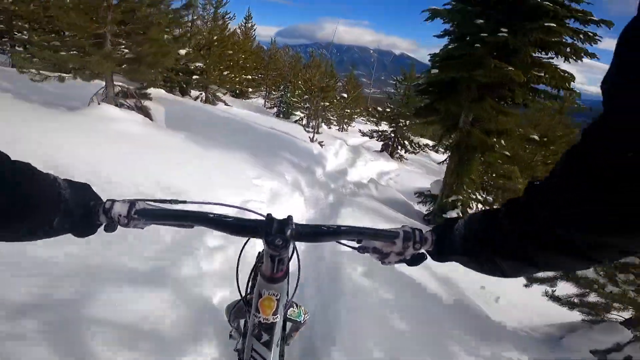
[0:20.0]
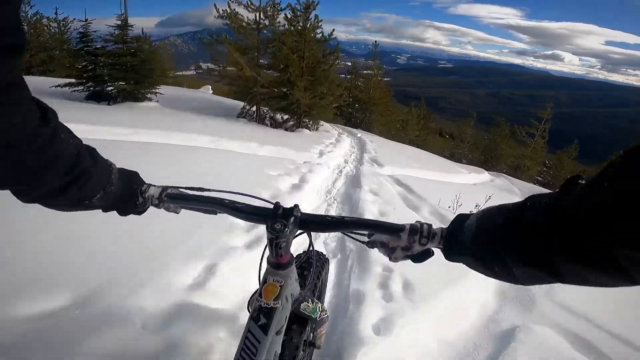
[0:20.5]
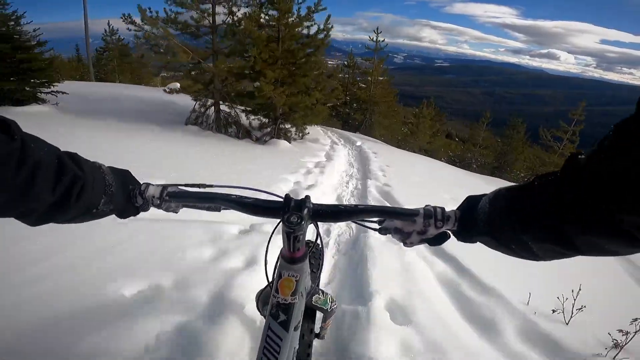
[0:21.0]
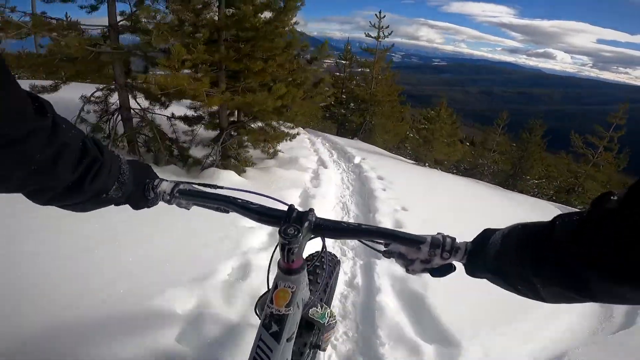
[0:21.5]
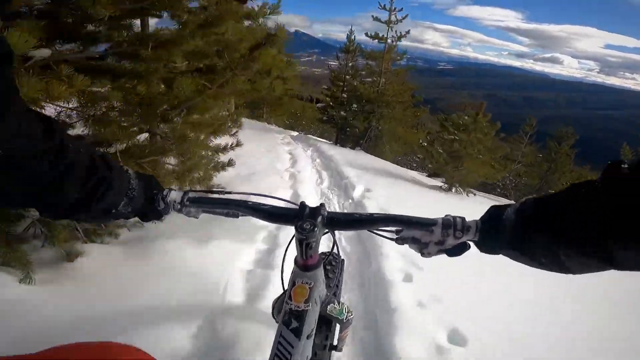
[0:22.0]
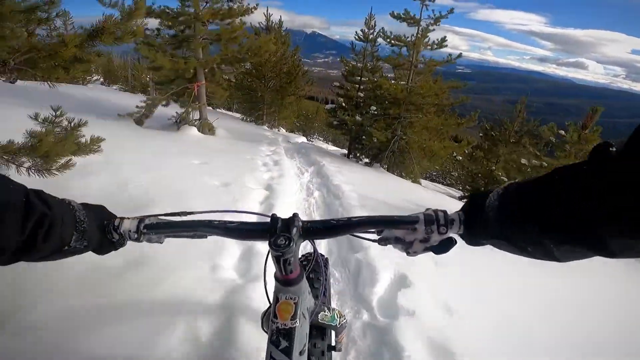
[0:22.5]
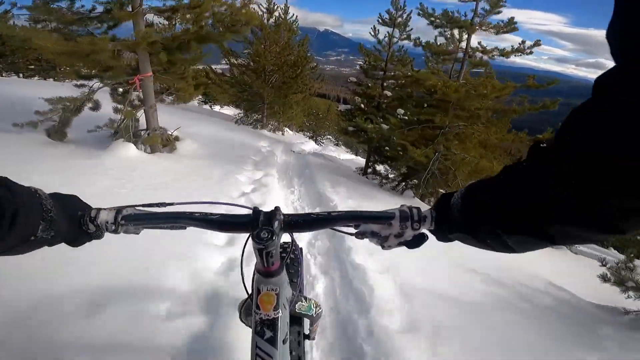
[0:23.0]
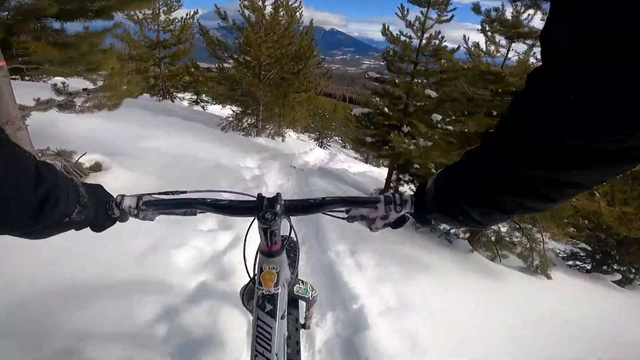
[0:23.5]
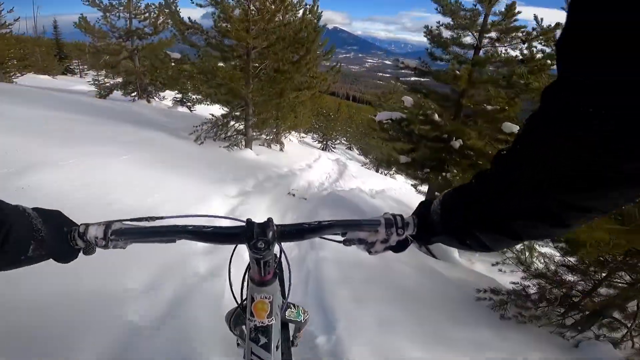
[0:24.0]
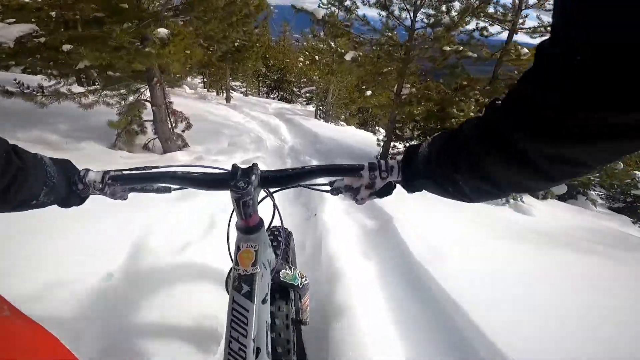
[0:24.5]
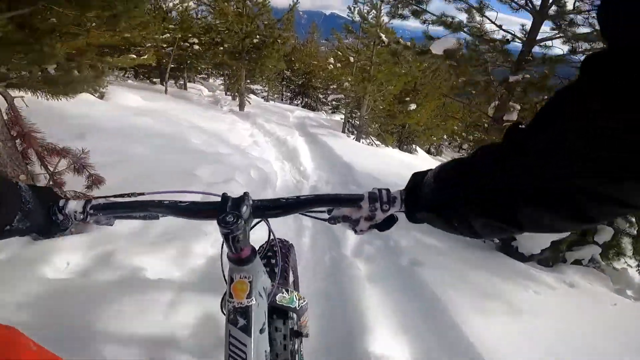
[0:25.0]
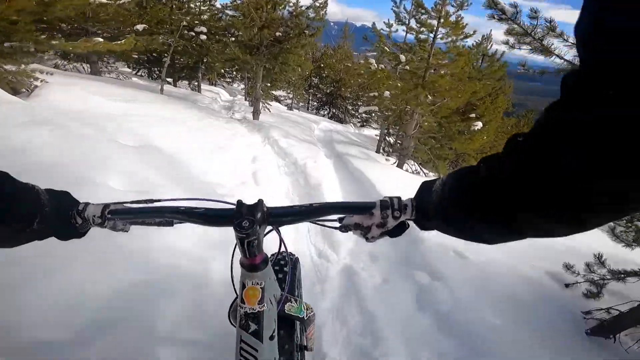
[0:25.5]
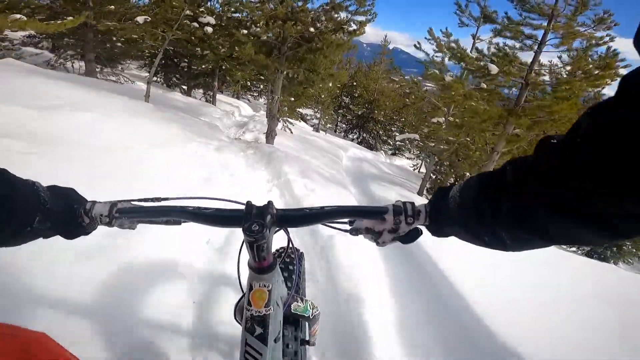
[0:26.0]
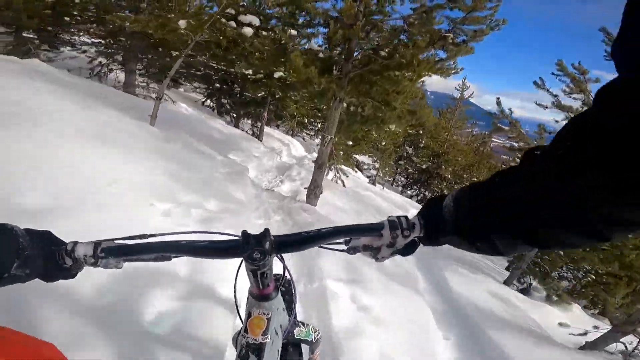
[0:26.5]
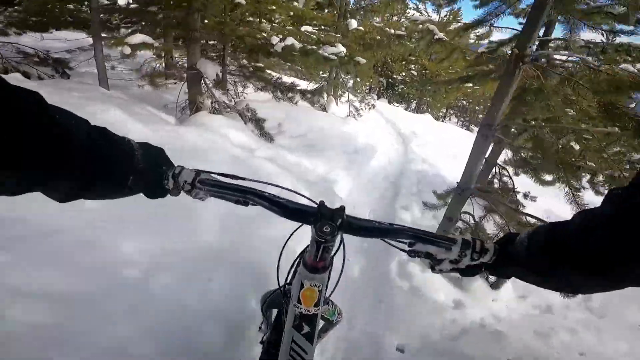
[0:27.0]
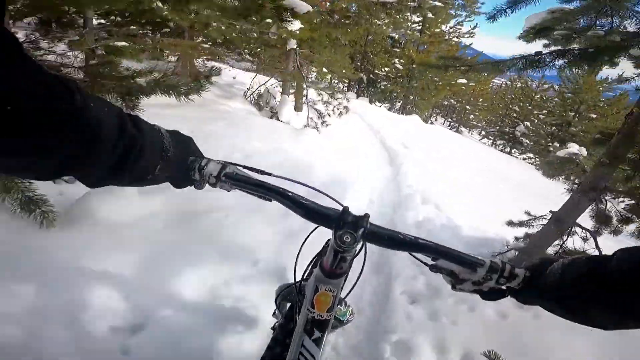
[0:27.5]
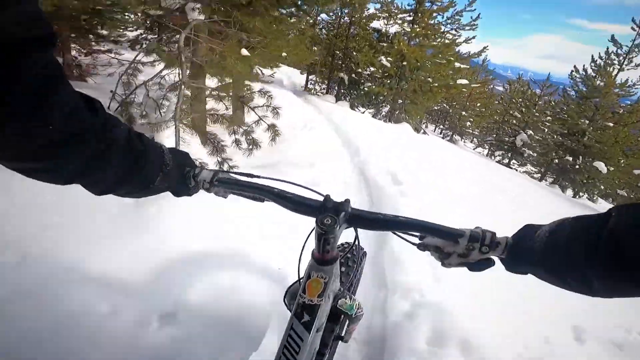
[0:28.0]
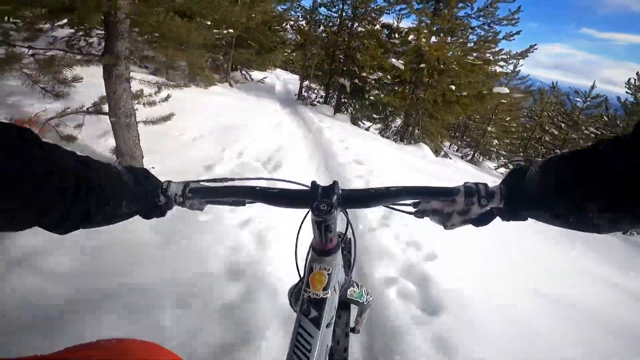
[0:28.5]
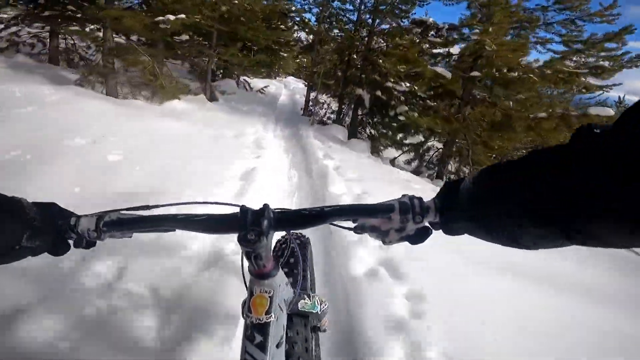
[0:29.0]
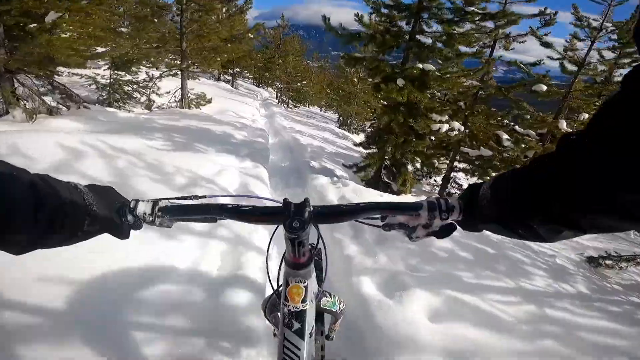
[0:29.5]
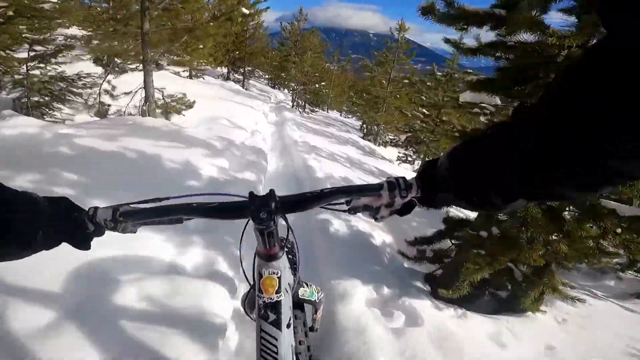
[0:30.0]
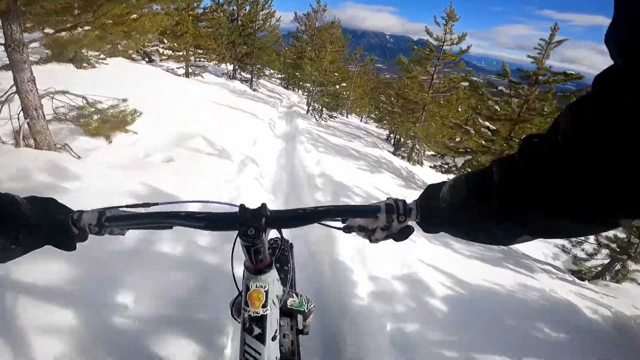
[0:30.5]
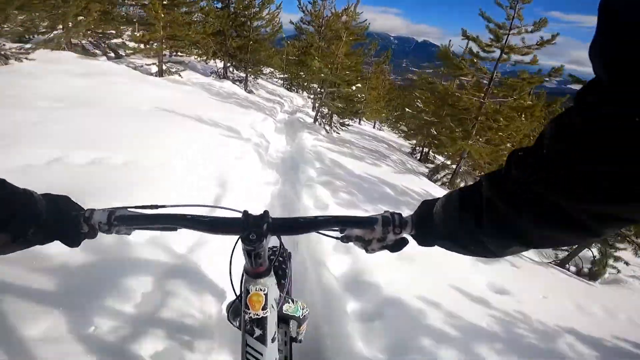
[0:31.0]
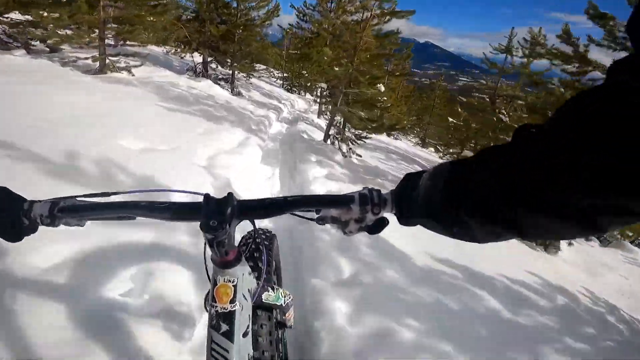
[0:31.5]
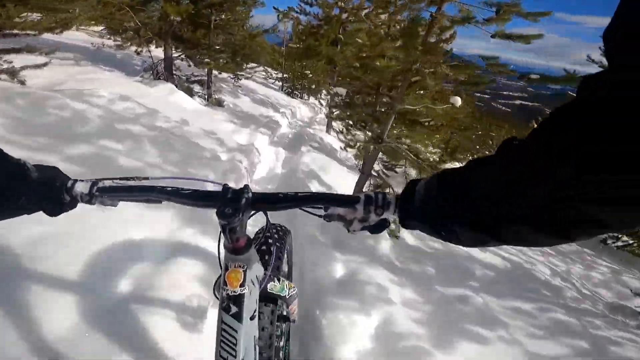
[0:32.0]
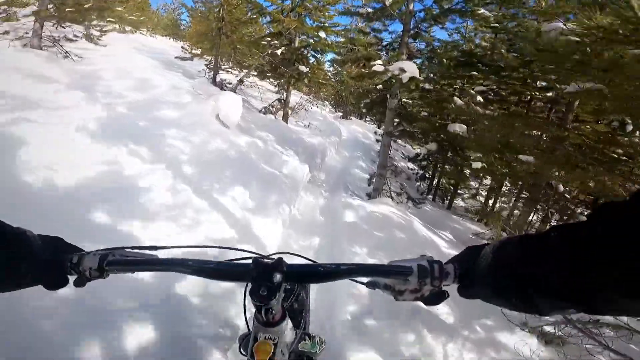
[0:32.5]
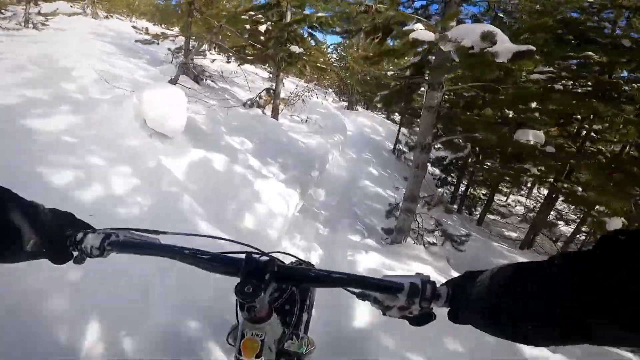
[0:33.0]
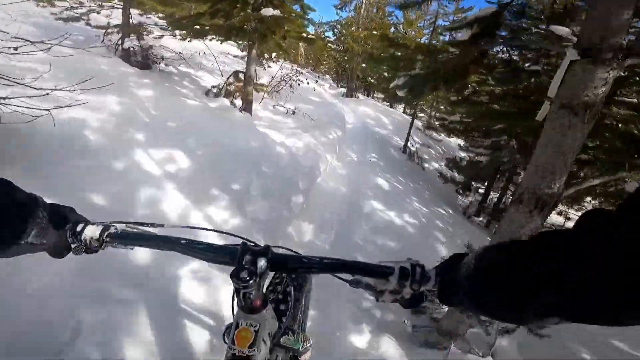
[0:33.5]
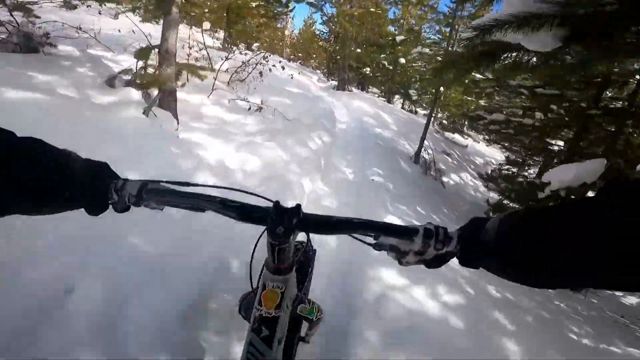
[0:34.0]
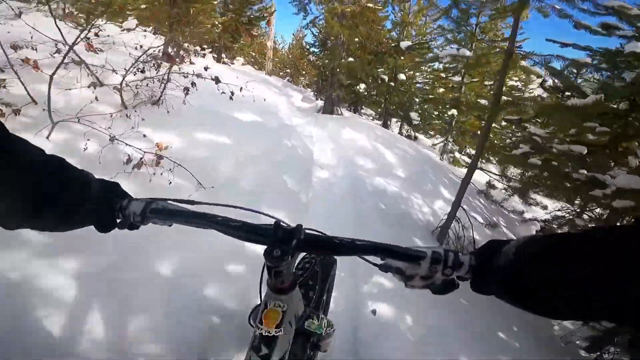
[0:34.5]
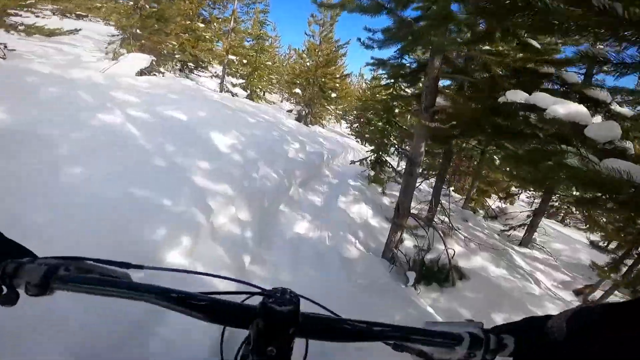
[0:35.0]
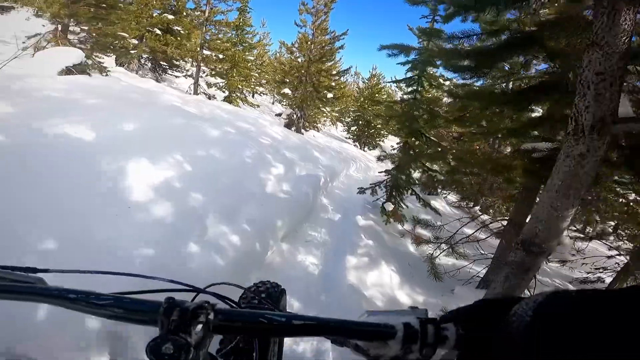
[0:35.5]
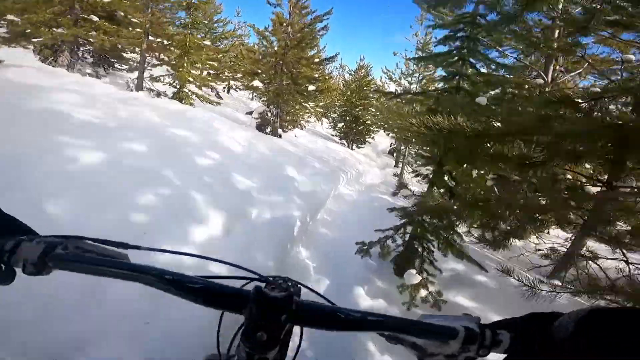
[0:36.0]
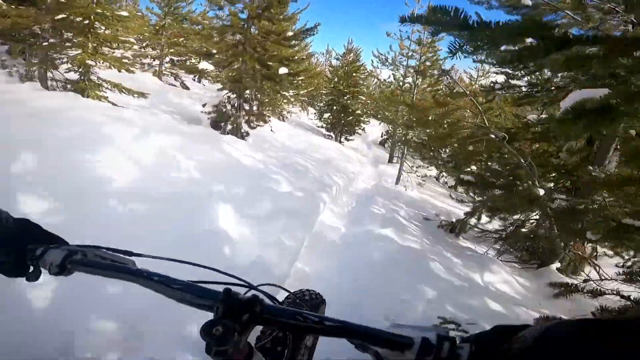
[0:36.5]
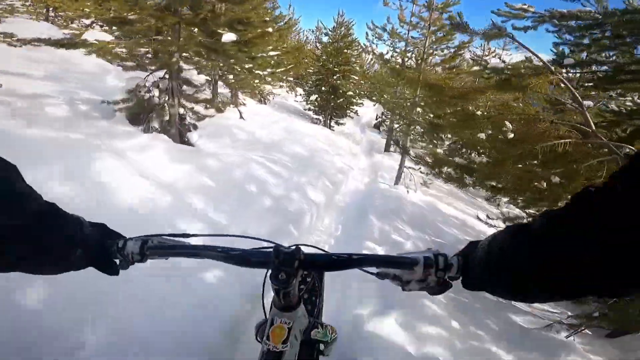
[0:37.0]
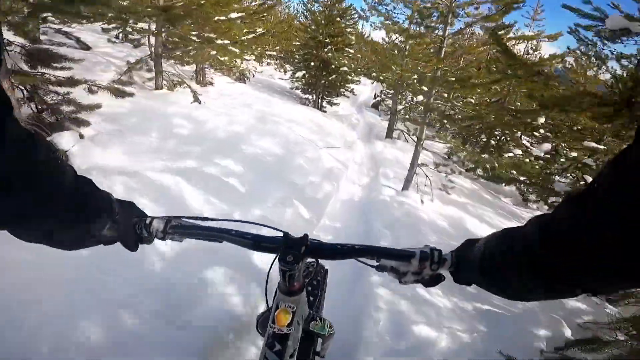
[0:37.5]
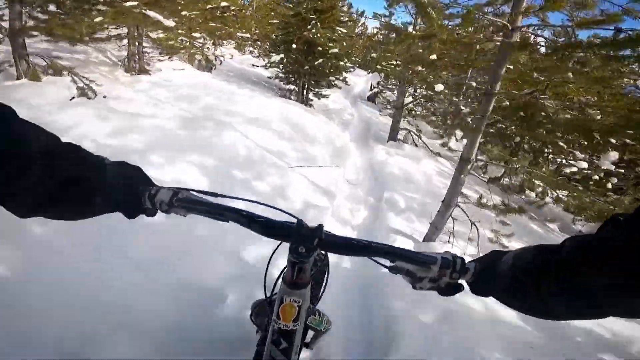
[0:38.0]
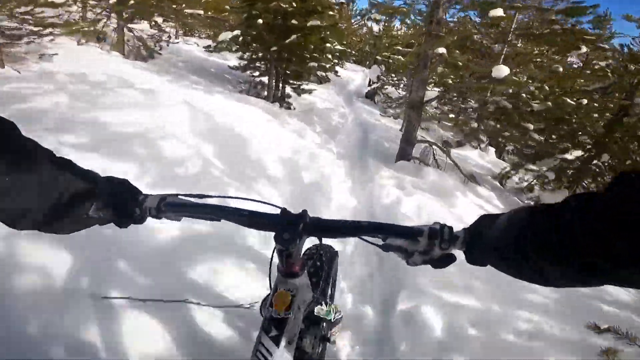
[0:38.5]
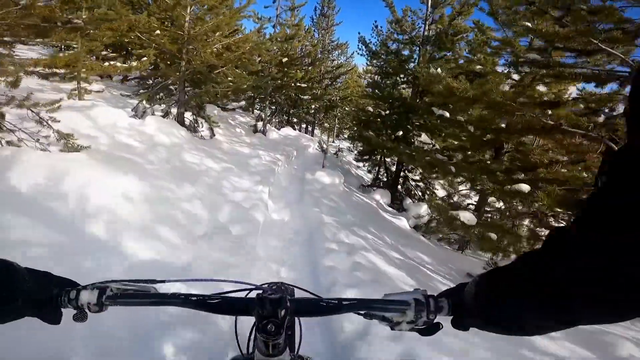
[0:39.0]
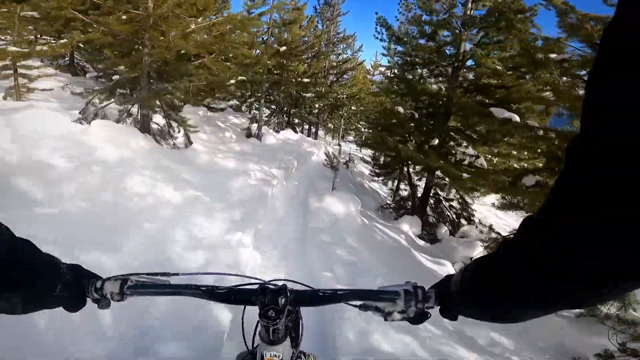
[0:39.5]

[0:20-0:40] The rider continues downhill through the snow and the trees, not going very fast. The front wheel of the bike is a little thicker than might be expected. The video cuts between different shots. At first he is in a small clearing with no trees on either side, where tracks show that maybe another bike had passed, crossing in the snow; the tracks show where different bikes have gone or where they split on the trail and created a fork. He goes around trees and through trees, steering well, balancing himself and going over a few bumps. The sky is fairly clear, blue and sunny with some clouds, not overcast. Mountains are visible in the back, and the bottom of the hill is to the right.